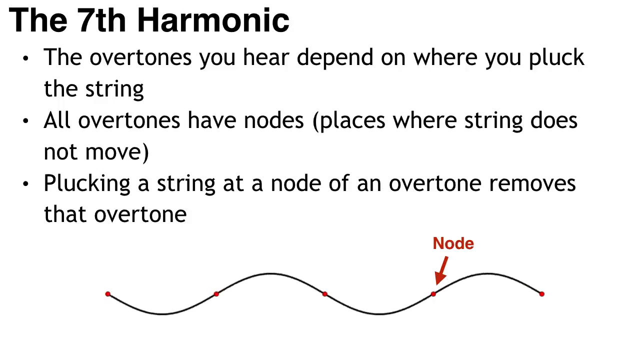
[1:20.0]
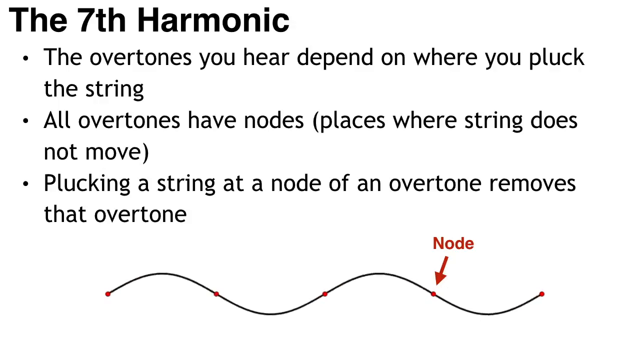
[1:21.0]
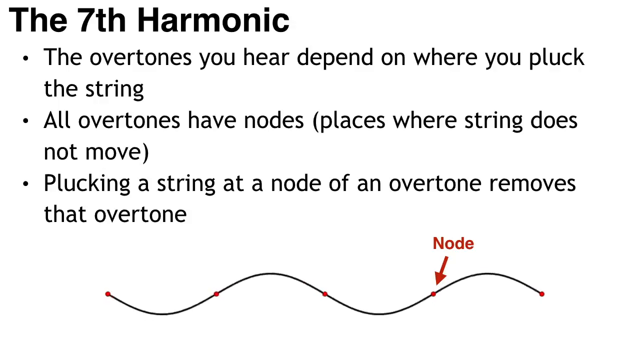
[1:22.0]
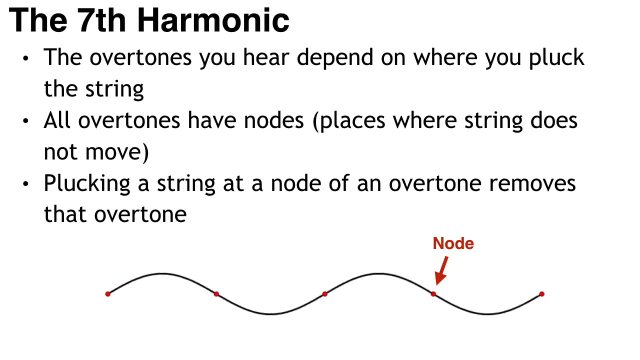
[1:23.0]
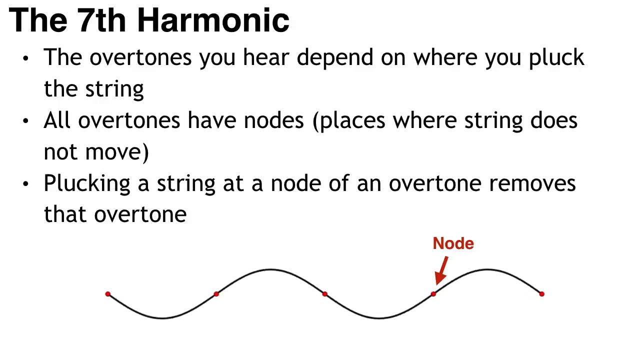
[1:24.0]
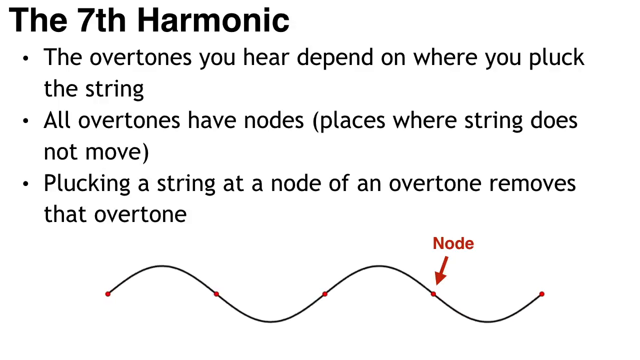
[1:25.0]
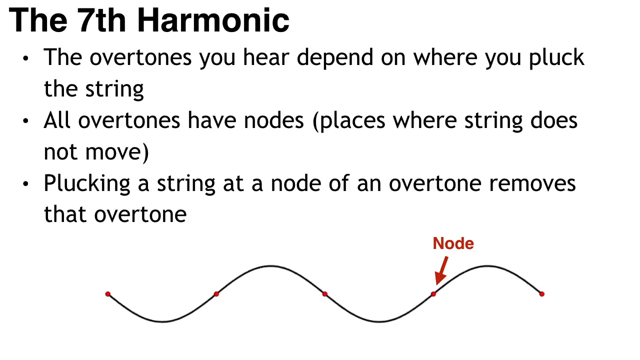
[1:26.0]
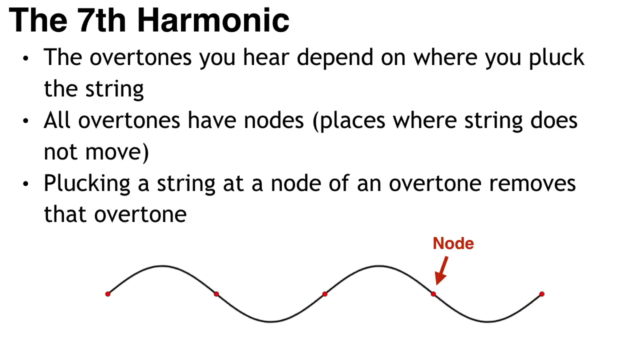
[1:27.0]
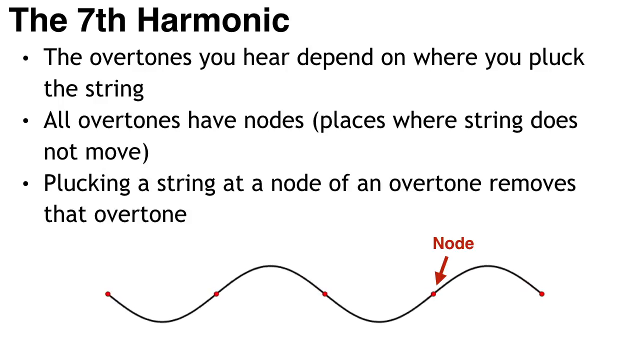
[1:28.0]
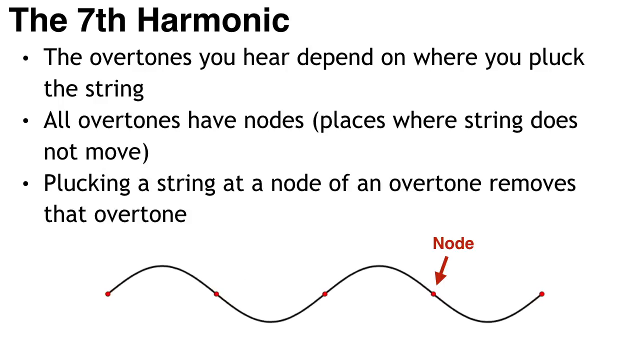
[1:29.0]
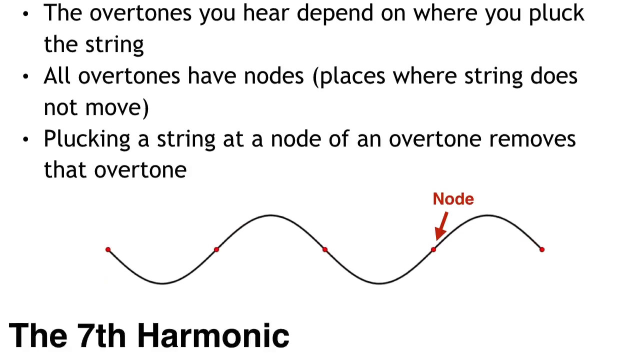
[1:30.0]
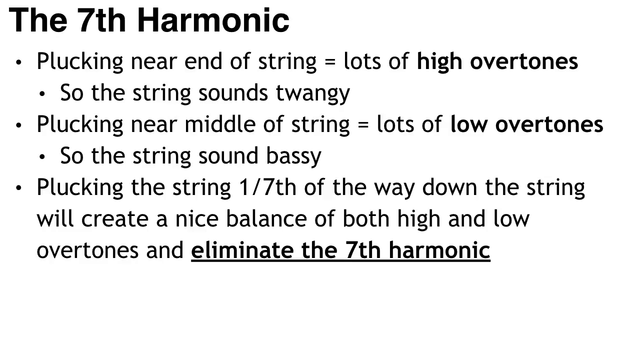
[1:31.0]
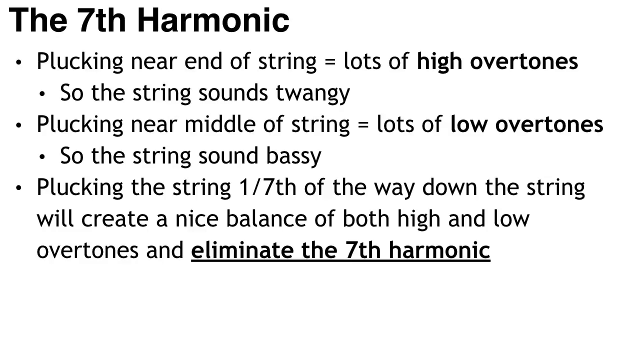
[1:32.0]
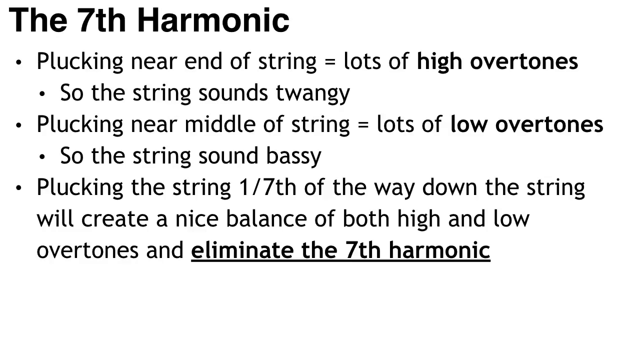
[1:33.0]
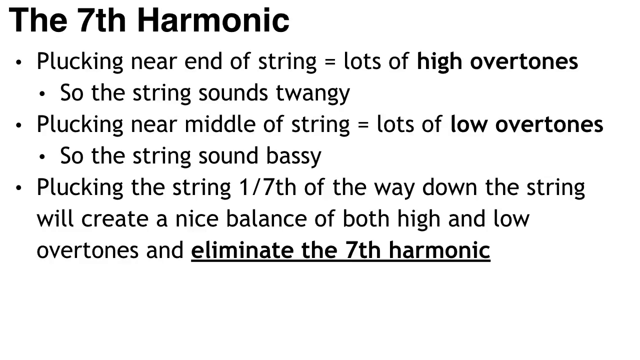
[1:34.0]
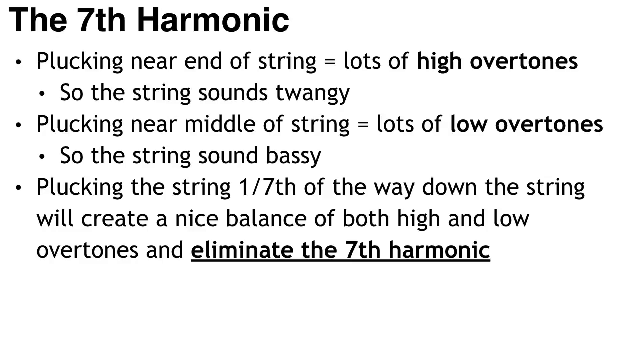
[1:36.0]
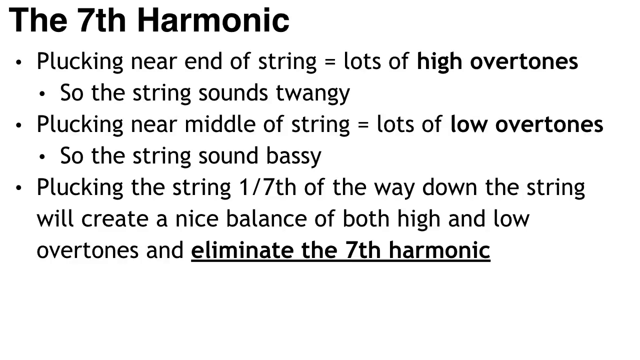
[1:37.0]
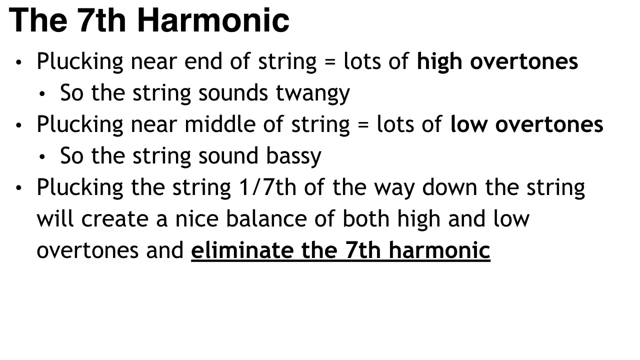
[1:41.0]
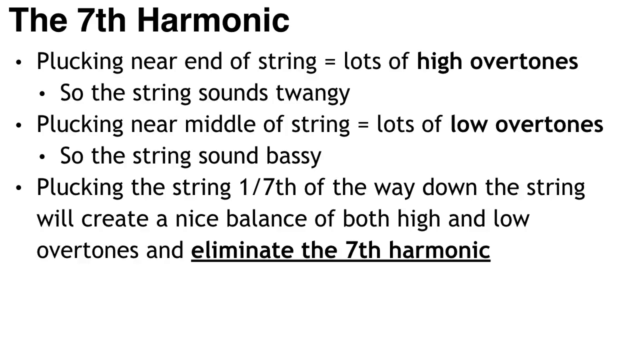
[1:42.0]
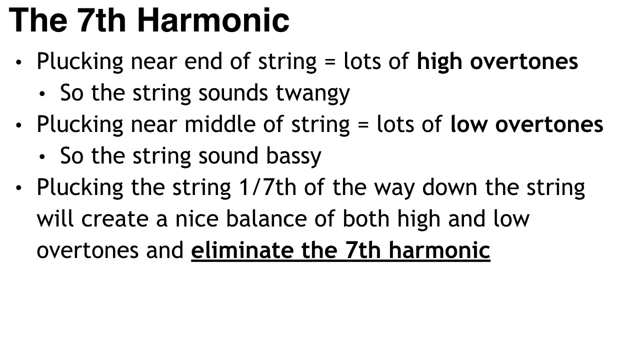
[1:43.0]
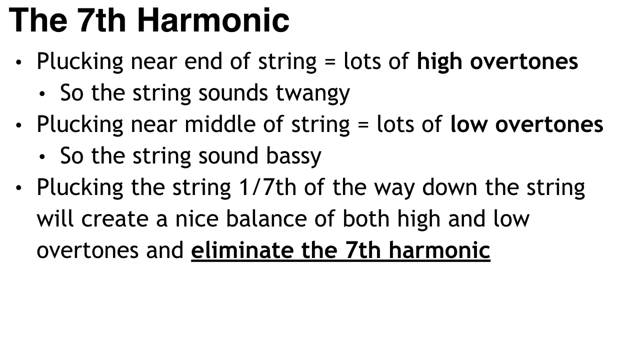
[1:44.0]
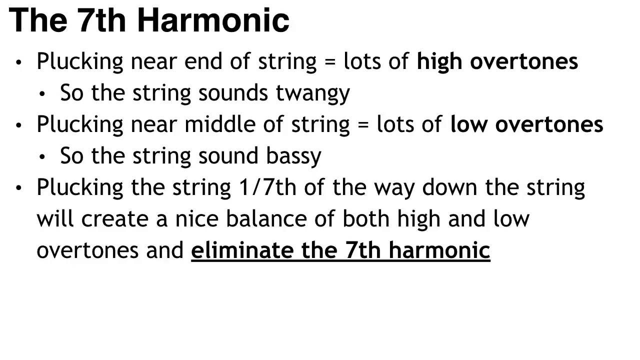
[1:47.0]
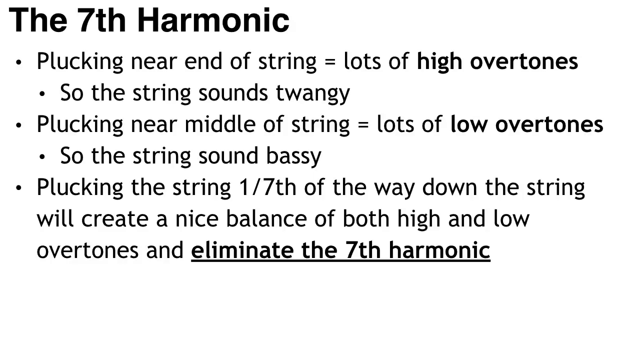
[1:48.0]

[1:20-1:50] An educational slide about music reads "the 7th harmonic" at the top left in bold print, with three bullet points below: "the overtones you hear depend on where you pluck the string," "all overtones have nodes, places where string does not move," and "plucking a string at a node of an overtone removes that overtone." A small graphic shows a sound wave and the nodes of each wave; the waves move up and down while the nodes, the in-between spots, stay the same. Then a slide comes up with three more bullets: "plucking near the end of the string = lots of high overtones so the string sounds twangy," "plucking near middle of string = lots of low overtones so the string sounds bassy," and "plucking the string 1/7th of the way down the string will create a nice balance of both high and low overtones and eliminate the 7th harmonic."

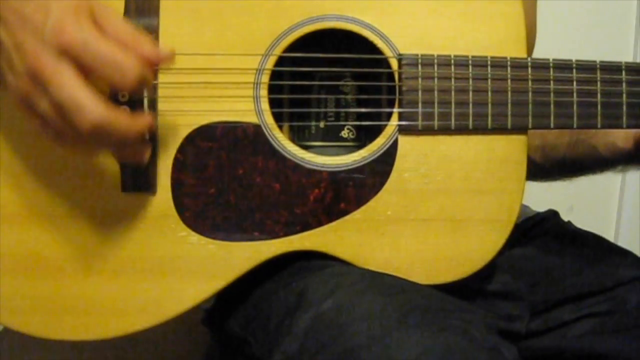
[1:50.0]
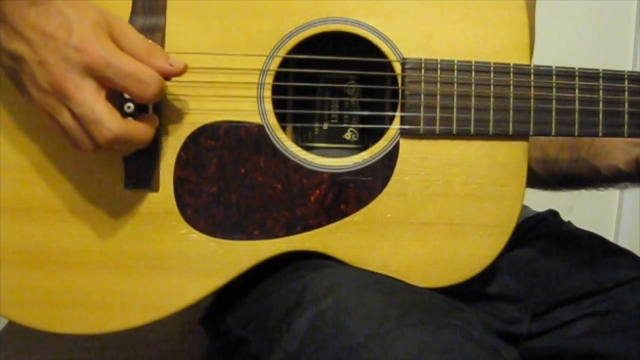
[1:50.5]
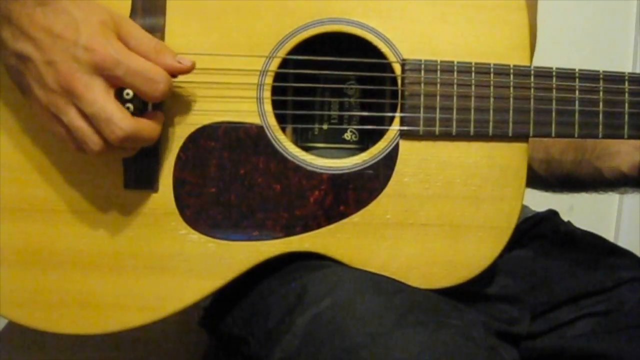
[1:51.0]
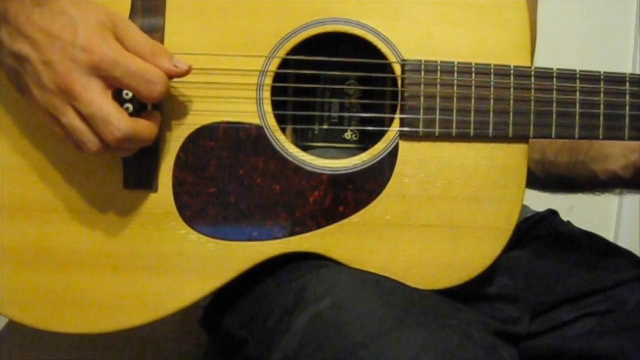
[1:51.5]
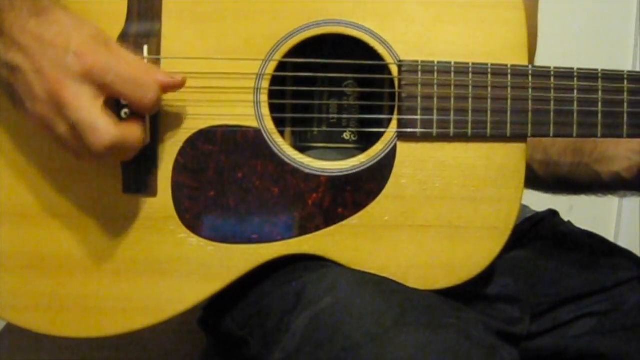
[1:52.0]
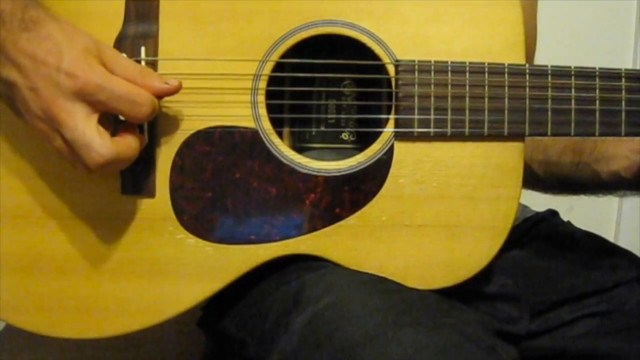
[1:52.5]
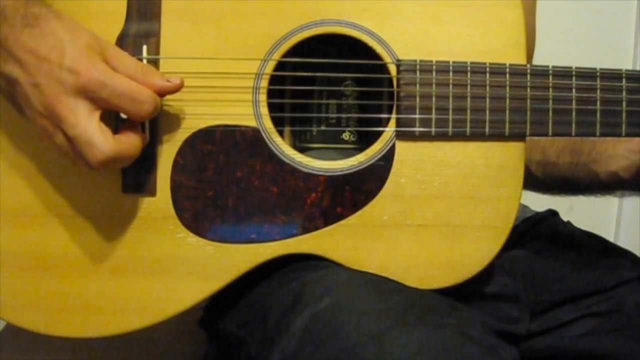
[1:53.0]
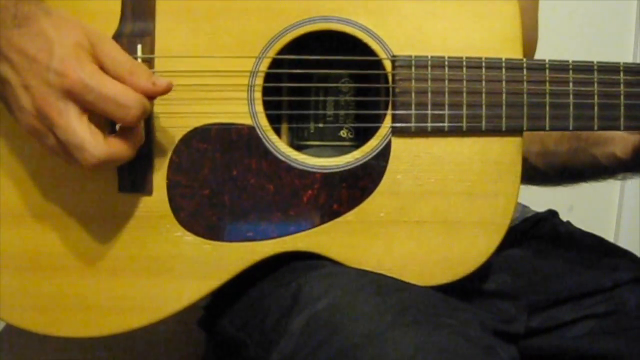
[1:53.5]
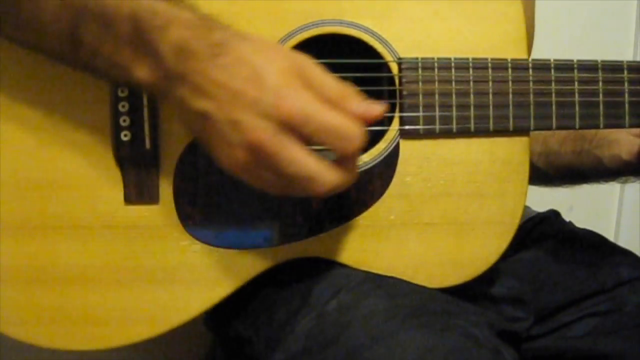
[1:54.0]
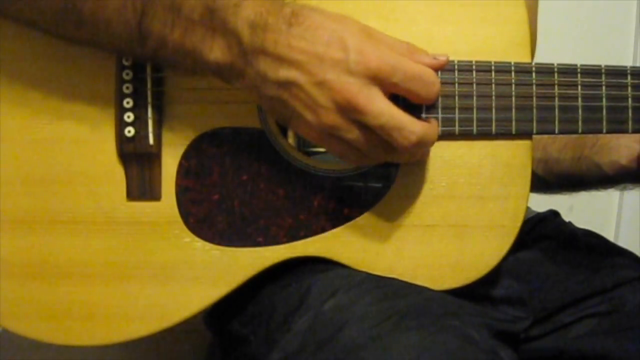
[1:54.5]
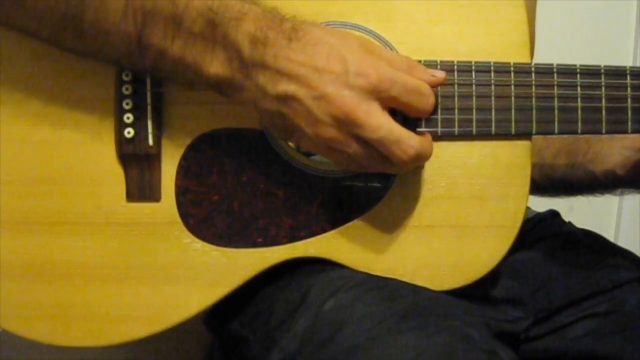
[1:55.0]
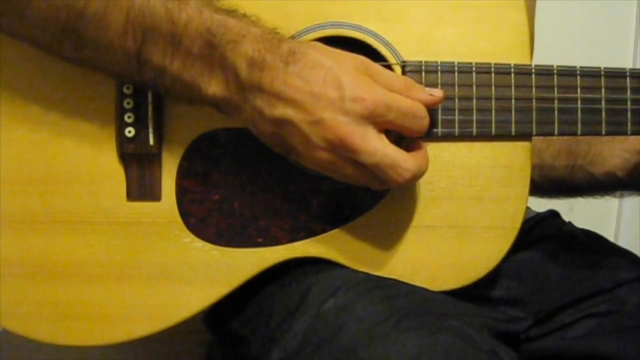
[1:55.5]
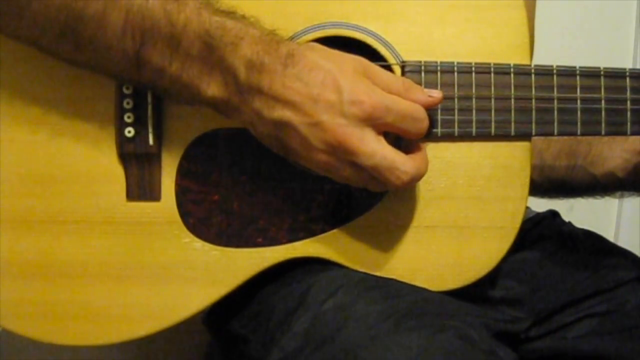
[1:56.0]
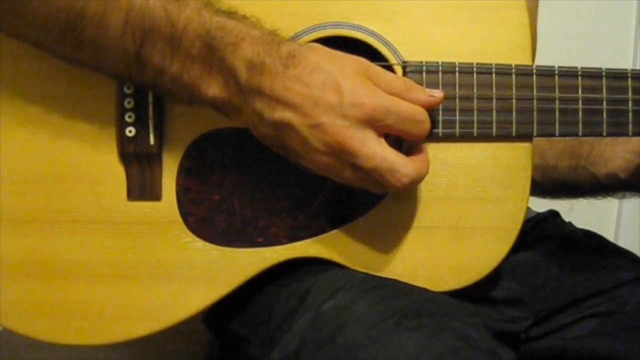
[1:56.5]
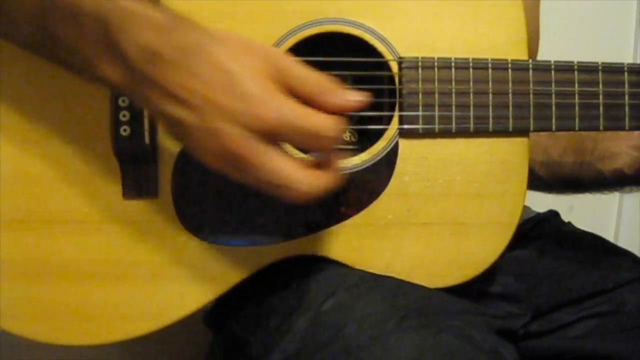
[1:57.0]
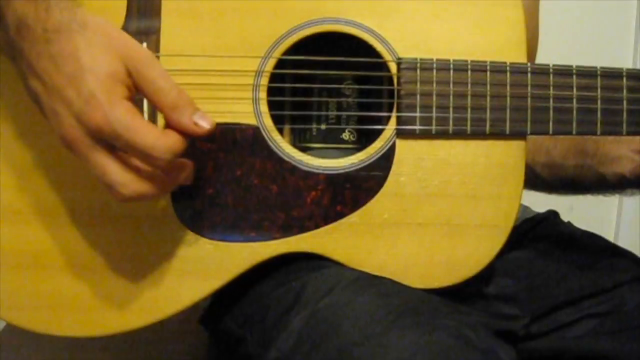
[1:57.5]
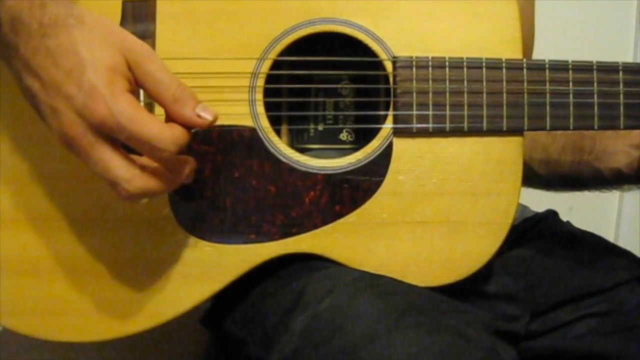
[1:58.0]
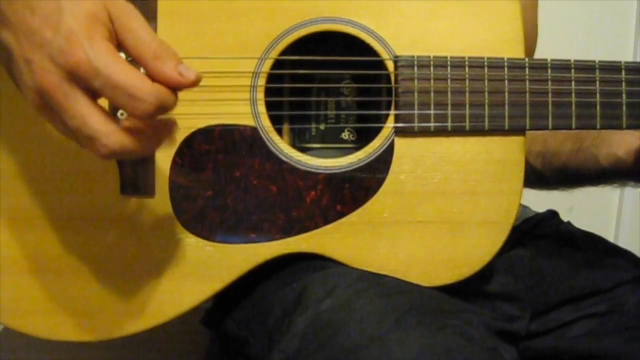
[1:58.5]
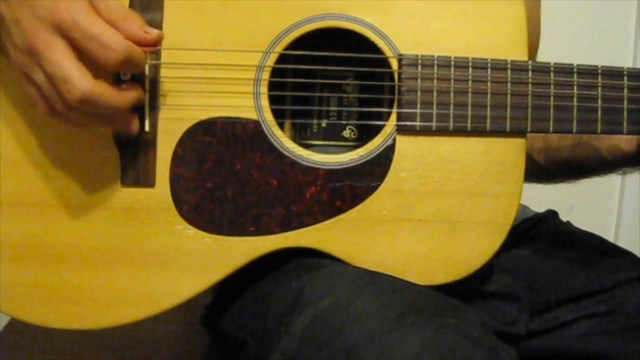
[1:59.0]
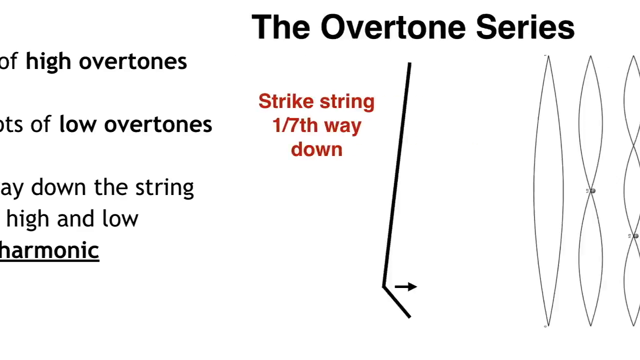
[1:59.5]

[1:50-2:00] A man sits in a chair plucking the strings of a six-stringed acoustic guitar. He has some kind of black pants or black fabric over his lap. The guitar is light beige with a dark brown plastic part. He plucks at various strings along the fret and closer to the attachment. He appears to be a light-skinned Caucasian man, and he holds a pick between his thumb and index finger. He plucks a string and listens to it, then plucks two strings and one or two more further down.